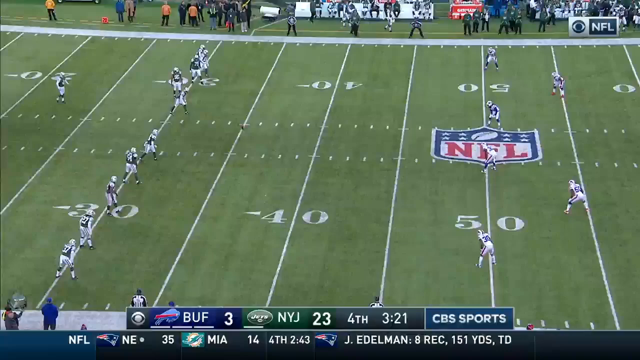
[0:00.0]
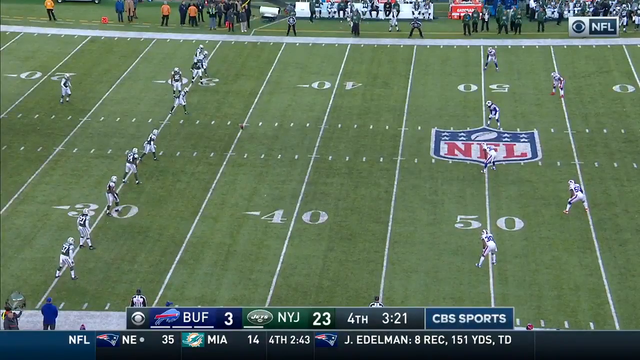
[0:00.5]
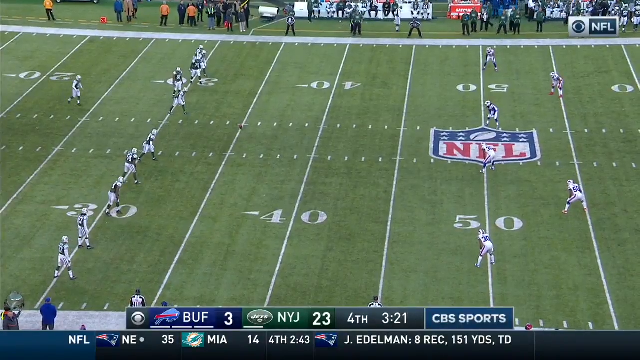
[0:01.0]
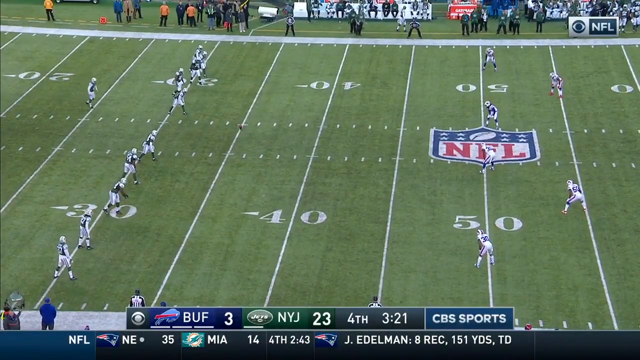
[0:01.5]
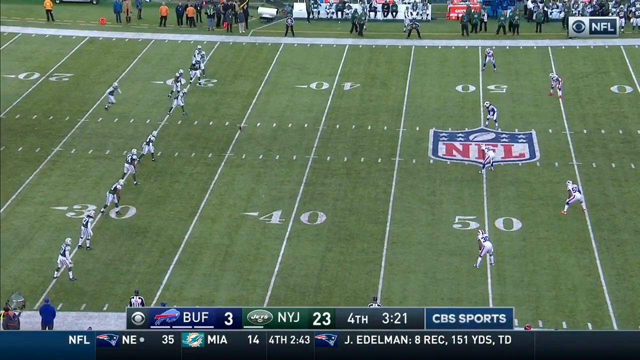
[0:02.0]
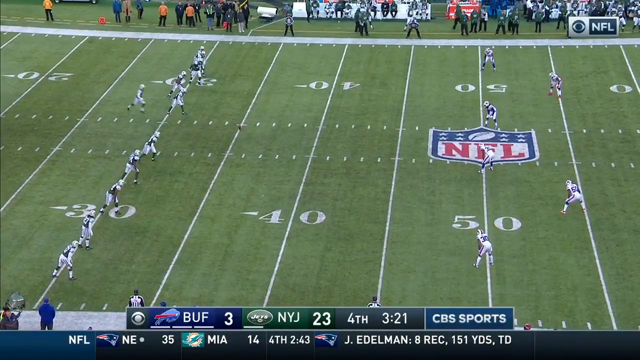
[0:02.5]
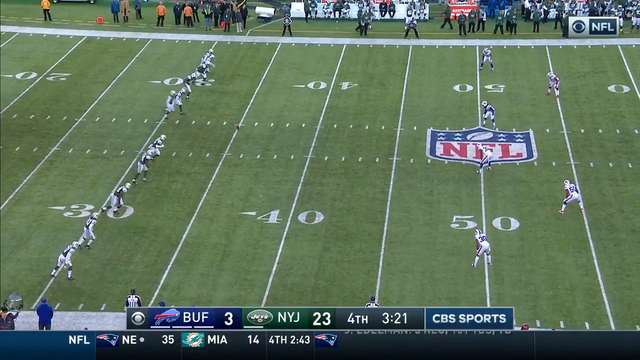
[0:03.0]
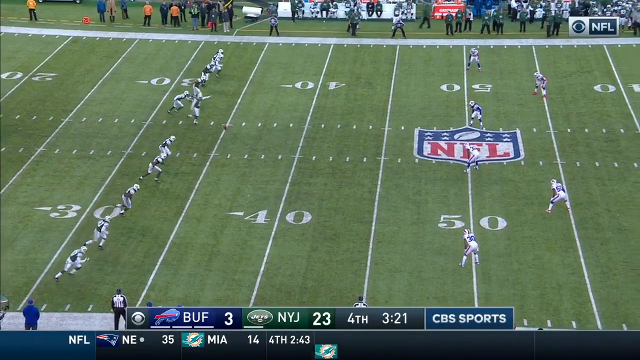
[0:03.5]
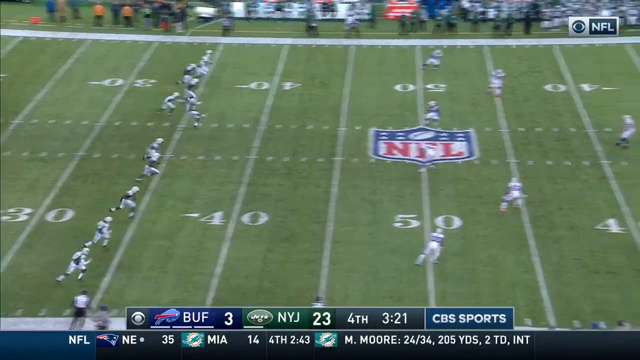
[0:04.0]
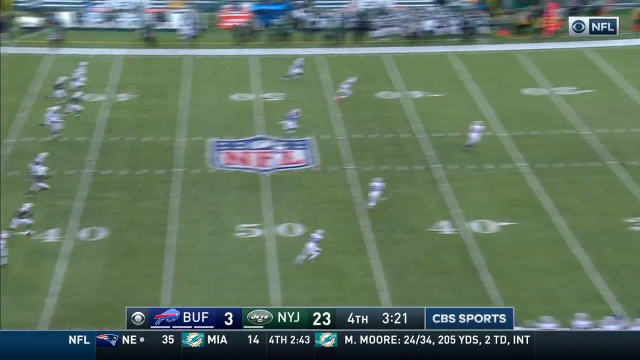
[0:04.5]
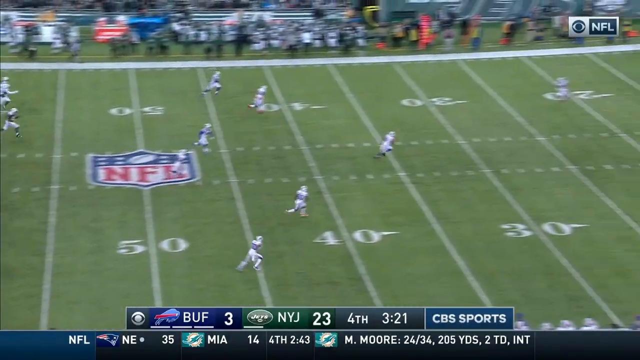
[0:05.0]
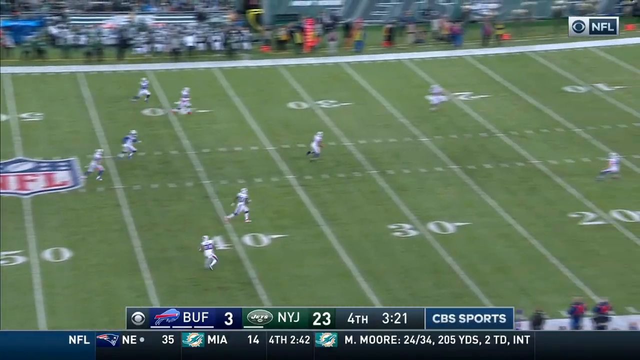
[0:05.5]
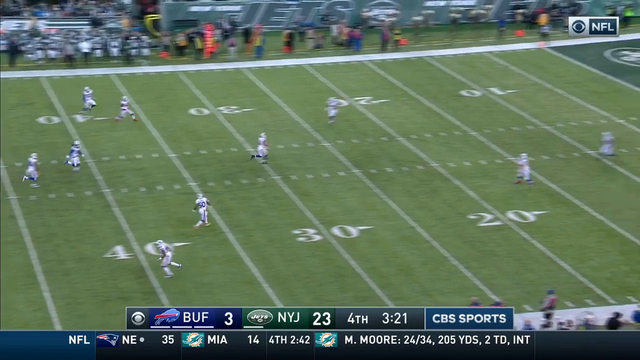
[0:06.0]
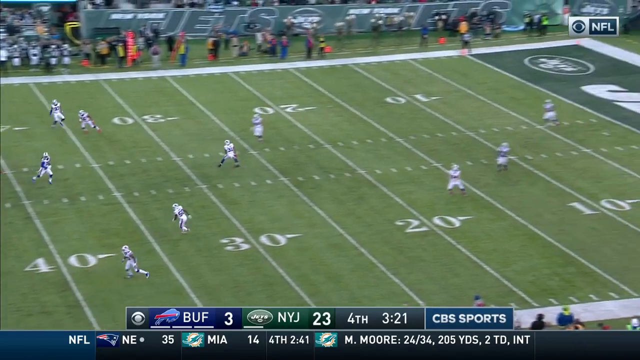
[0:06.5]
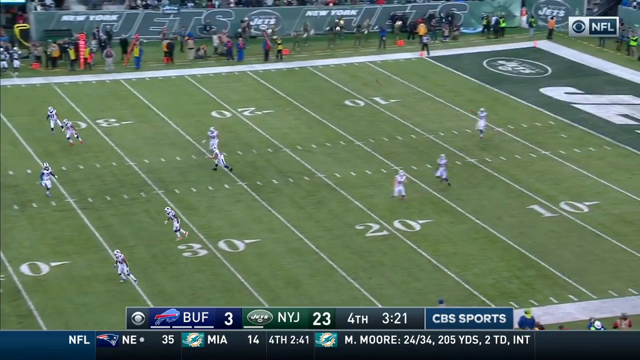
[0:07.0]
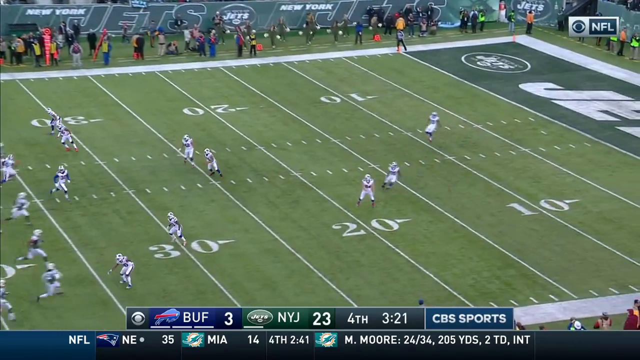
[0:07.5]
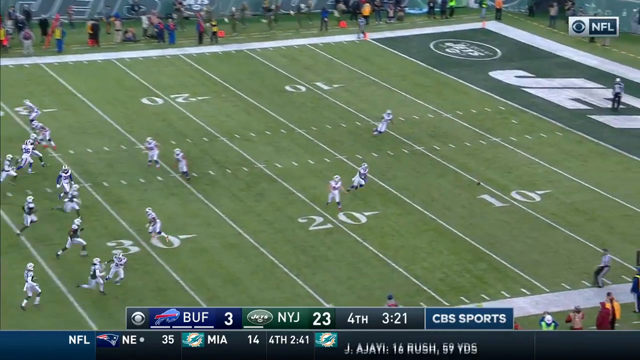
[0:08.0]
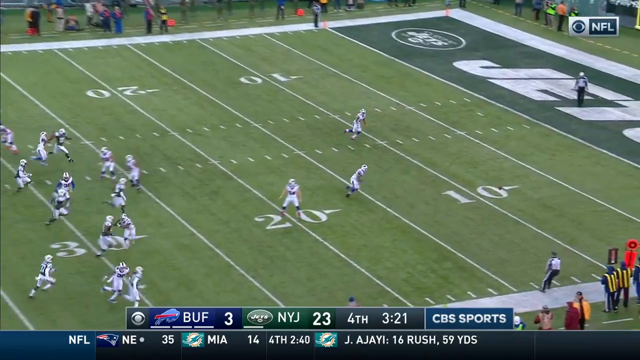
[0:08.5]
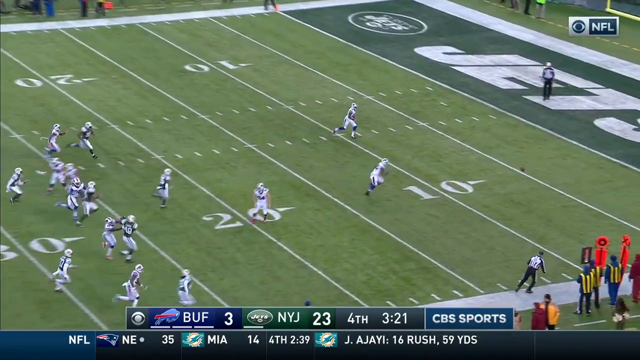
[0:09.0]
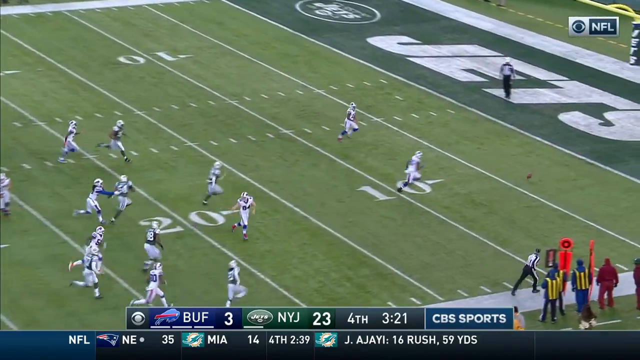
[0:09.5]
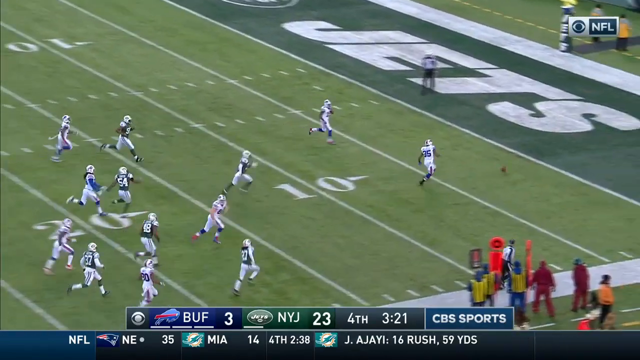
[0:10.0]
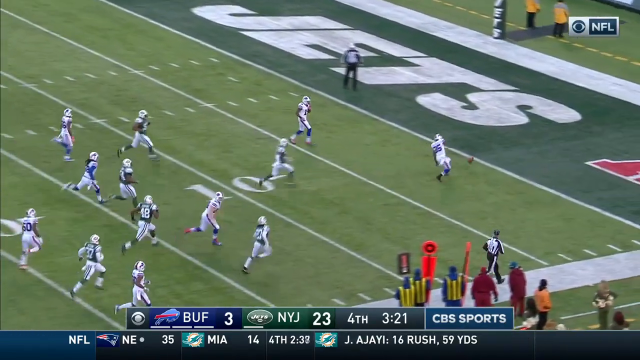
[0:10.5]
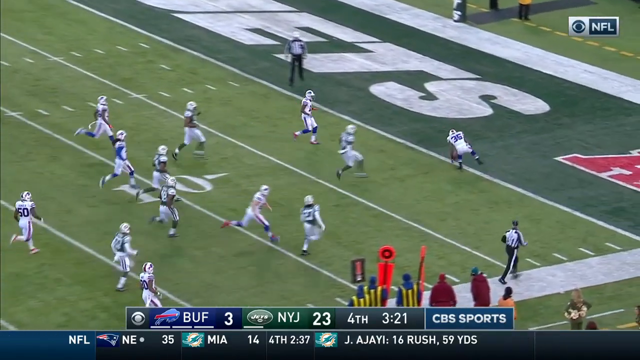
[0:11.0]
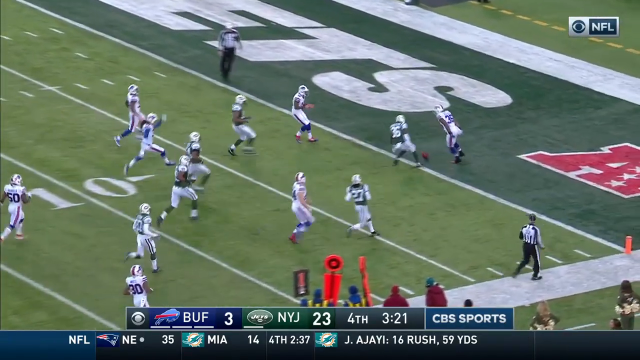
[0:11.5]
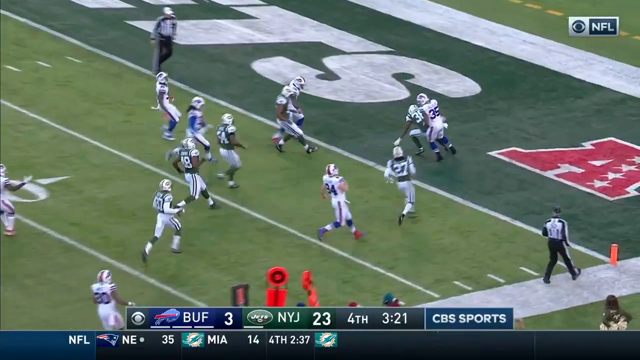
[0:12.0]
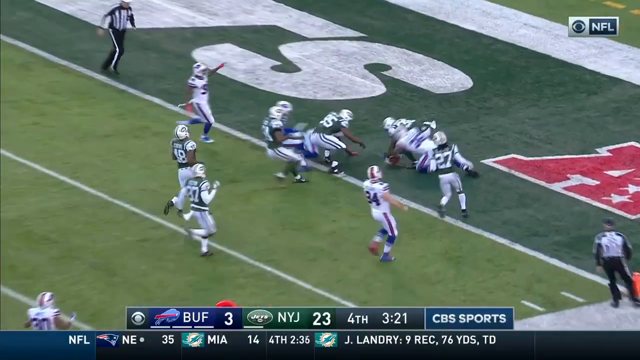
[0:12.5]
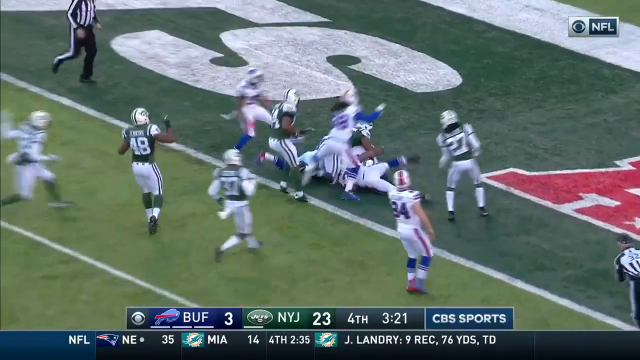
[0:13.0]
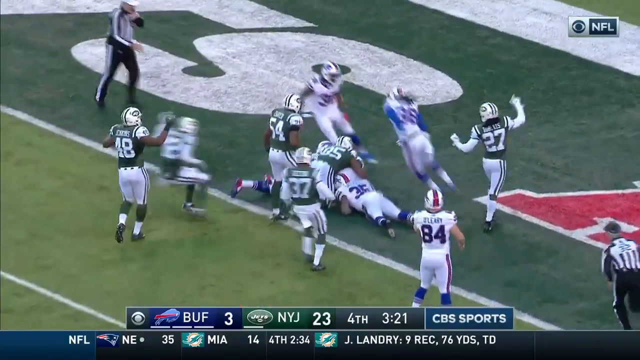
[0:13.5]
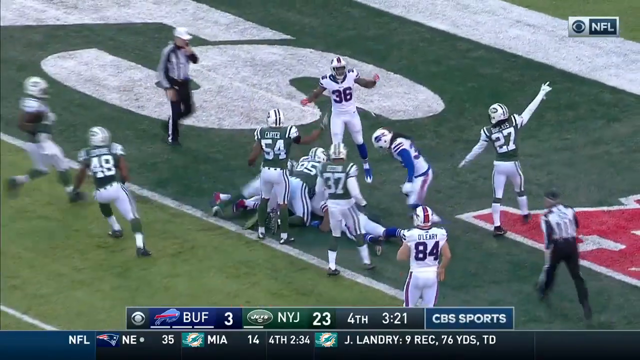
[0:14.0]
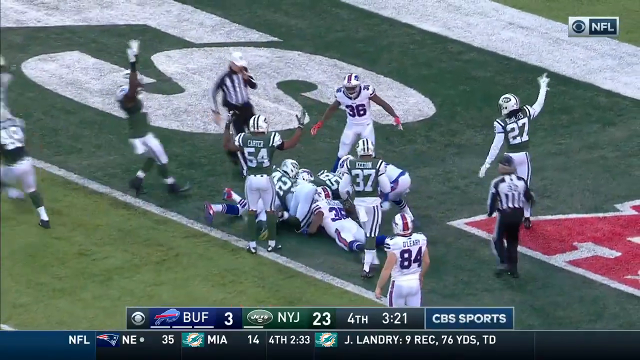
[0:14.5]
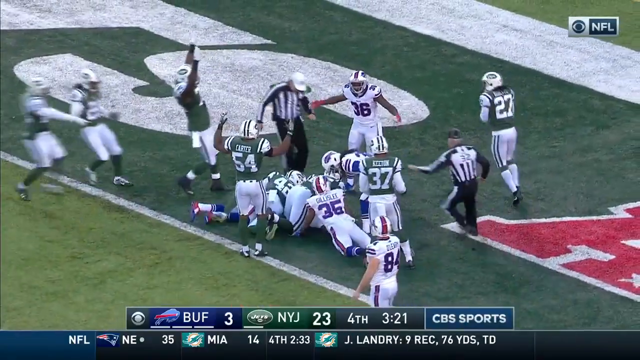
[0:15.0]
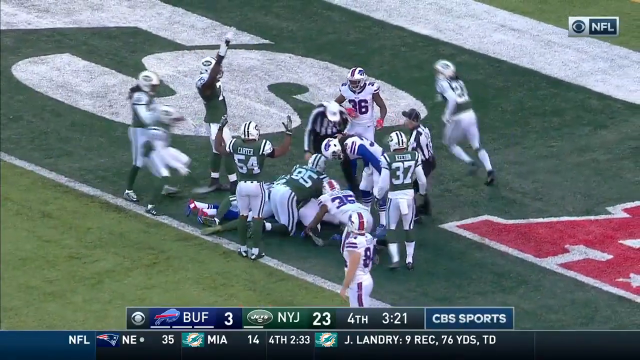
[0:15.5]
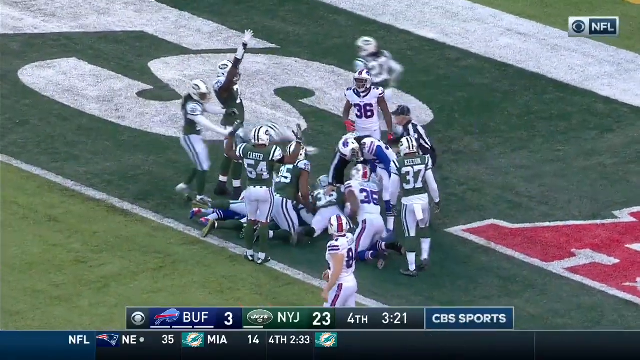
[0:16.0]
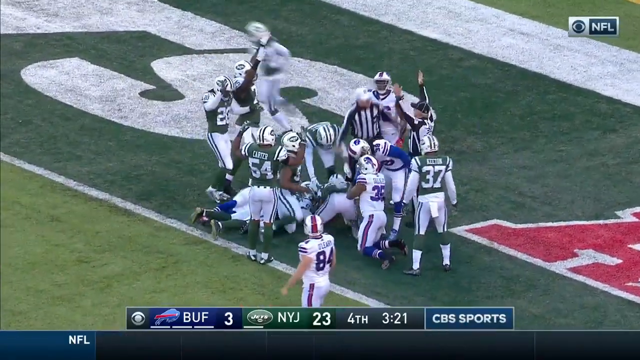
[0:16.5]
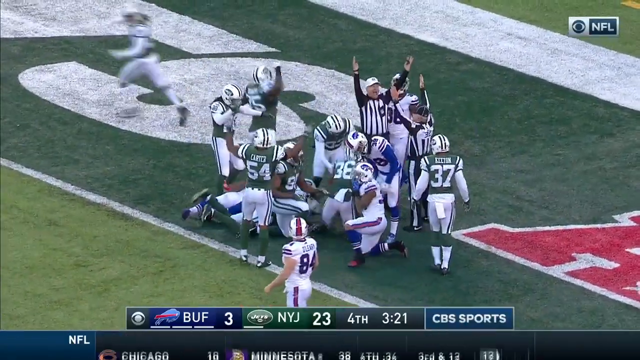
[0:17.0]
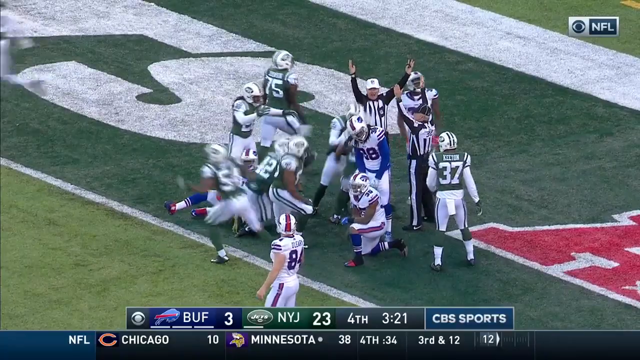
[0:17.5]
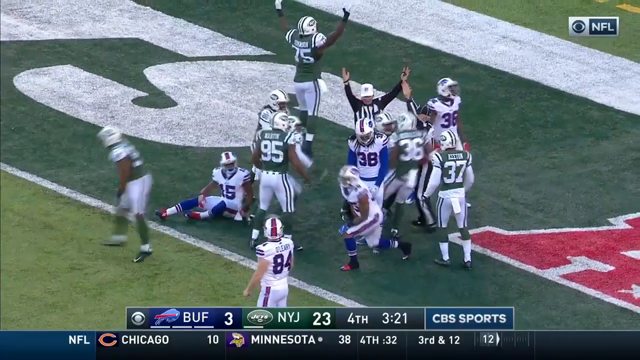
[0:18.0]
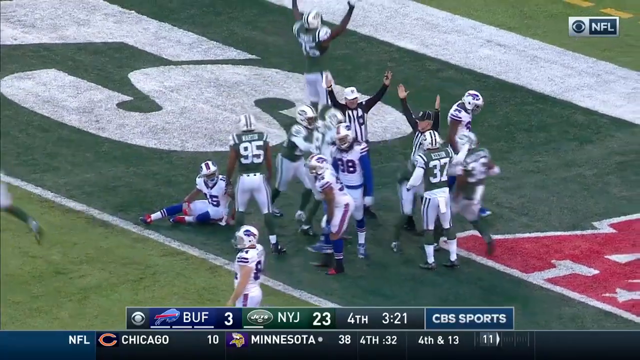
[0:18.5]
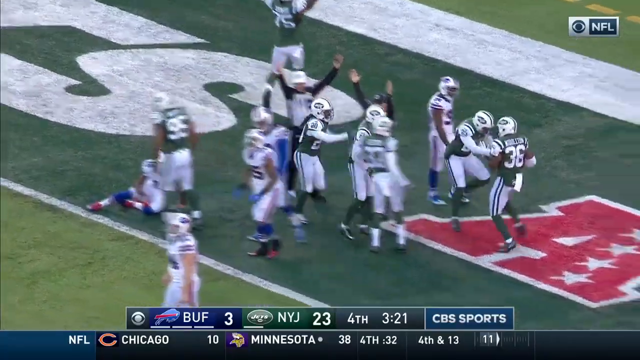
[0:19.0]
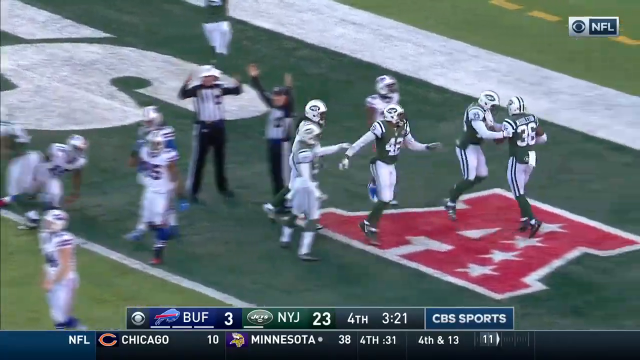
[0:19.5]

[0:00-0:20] An NFL football game is underway between Buffalo and the New York Jets. The kicker, who is from the Jets, kicks off to the other team, and the ball rolls right into the end zone as the Jets run down the field. A Buffalo player hits the ball but does not recover it, so the Jets are able to take possession, jump on it and score a touchdown right away. The Jets players put their hands up and celebrate because the ball was touched as it rolled into the end zone, and one referee signals a touchdown. The score shows Buffalo with 3 points and the New York Jets with 23, in the fourth quarter with 3:21 remaining.